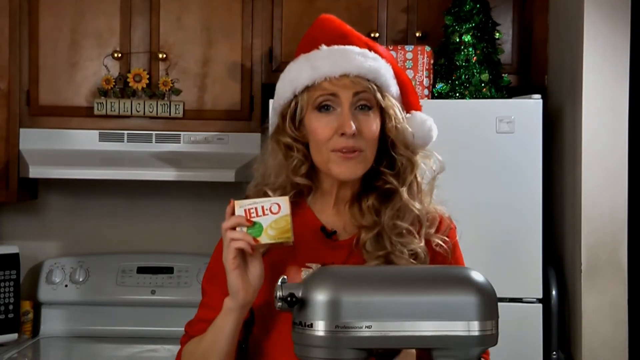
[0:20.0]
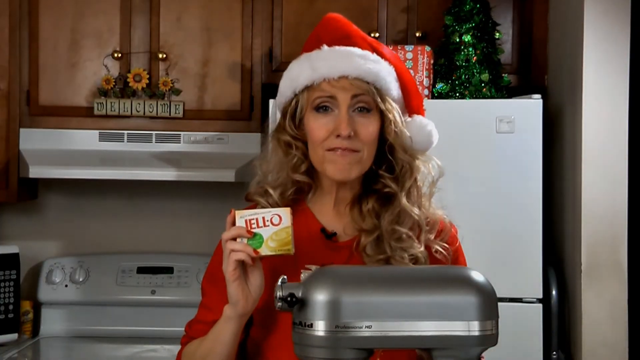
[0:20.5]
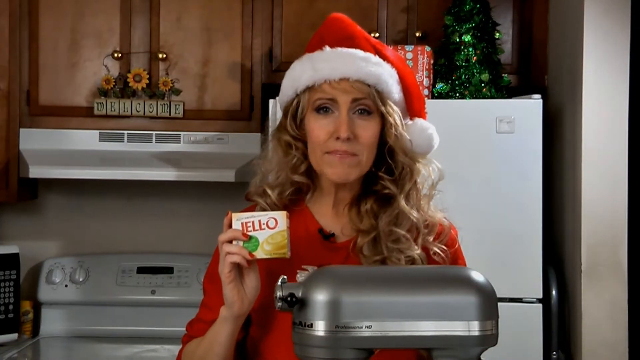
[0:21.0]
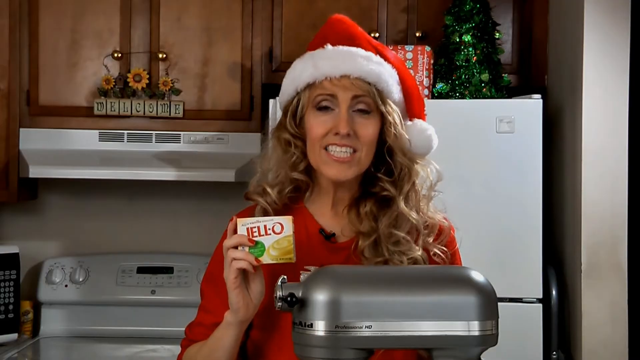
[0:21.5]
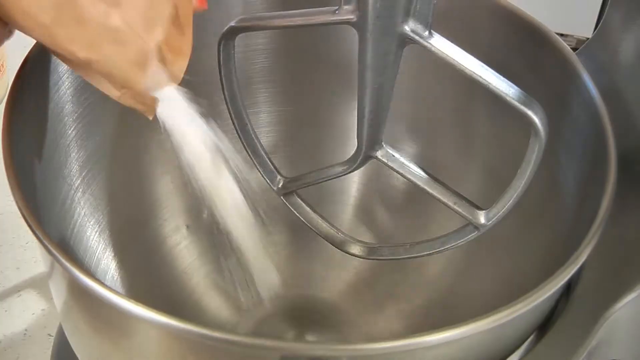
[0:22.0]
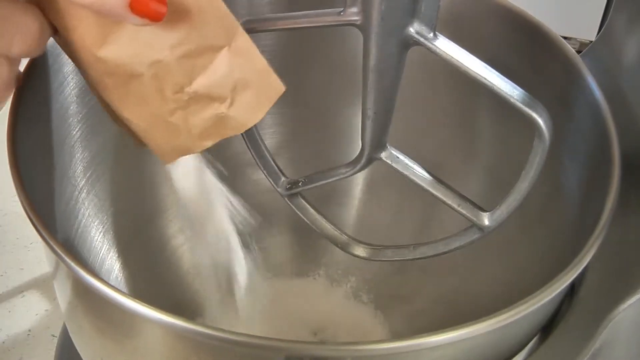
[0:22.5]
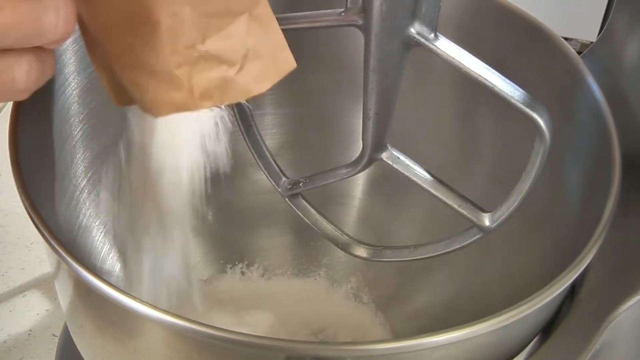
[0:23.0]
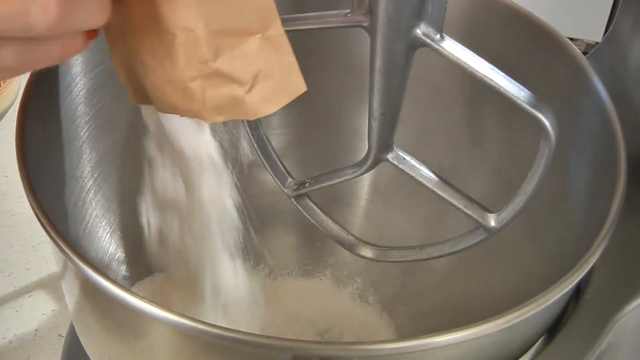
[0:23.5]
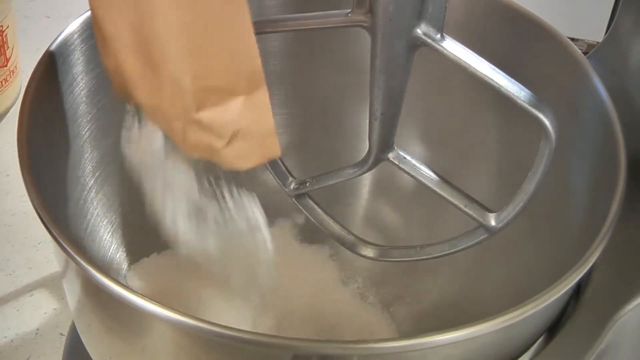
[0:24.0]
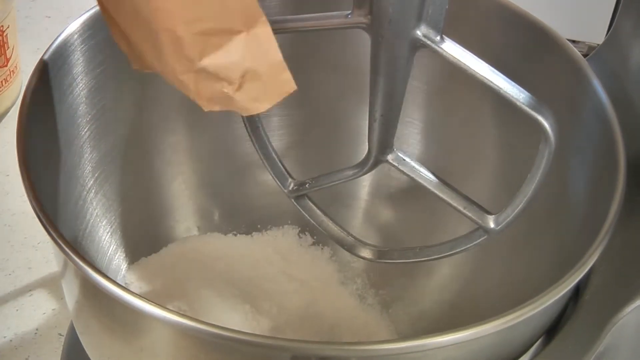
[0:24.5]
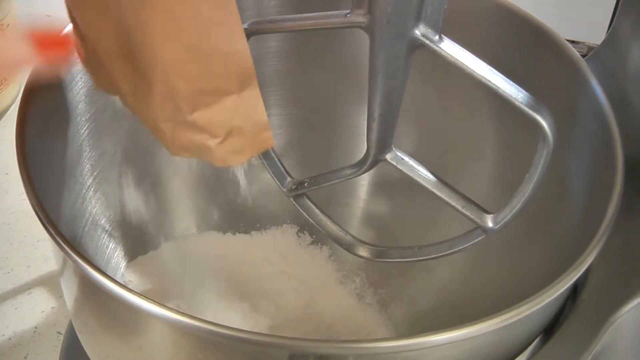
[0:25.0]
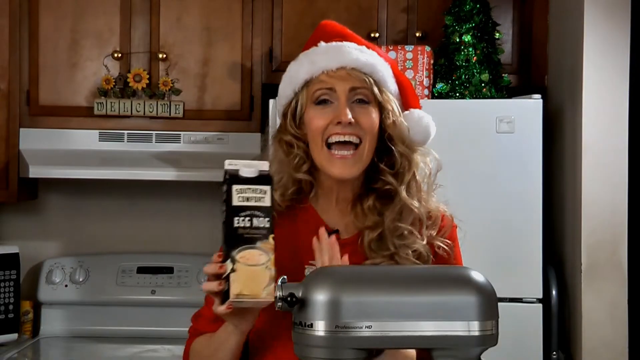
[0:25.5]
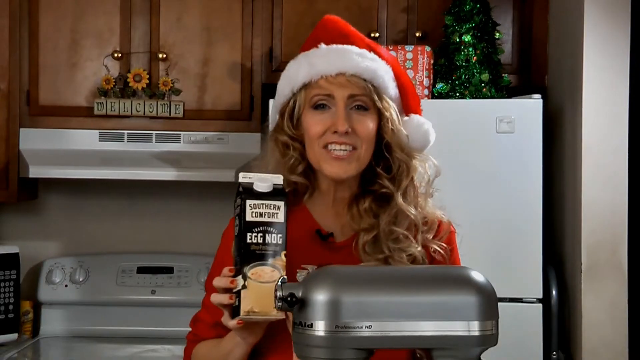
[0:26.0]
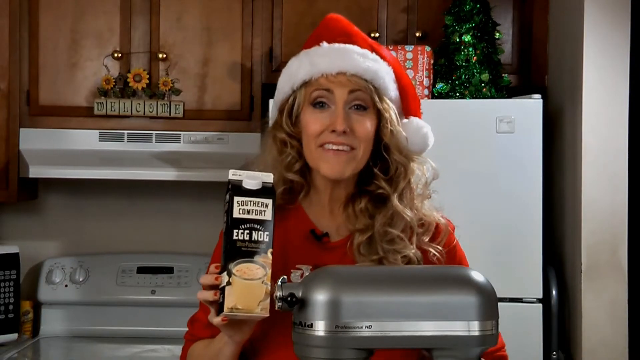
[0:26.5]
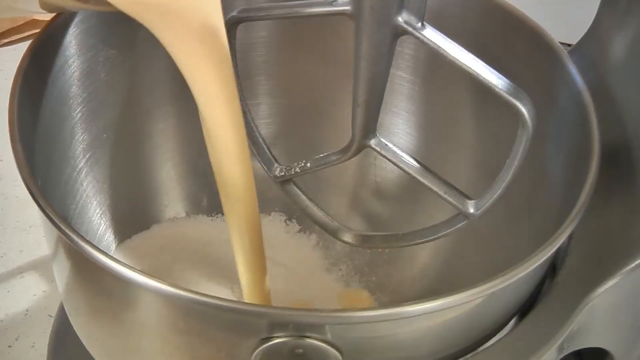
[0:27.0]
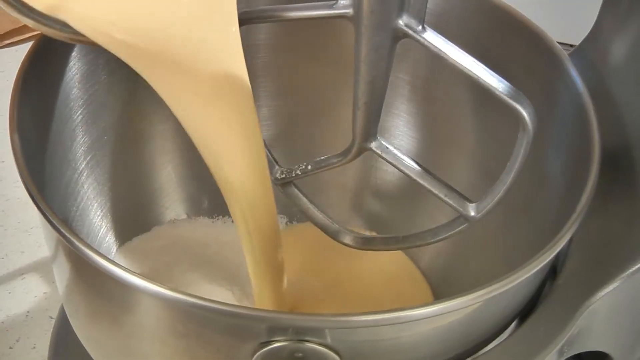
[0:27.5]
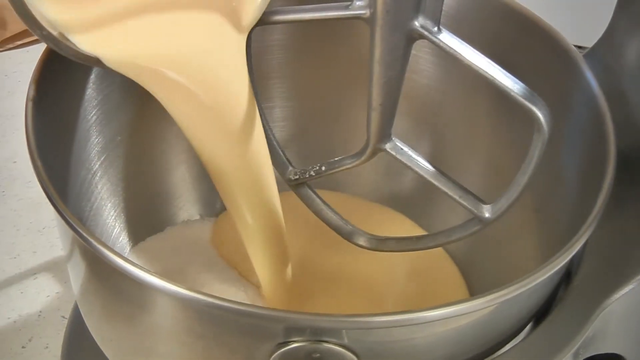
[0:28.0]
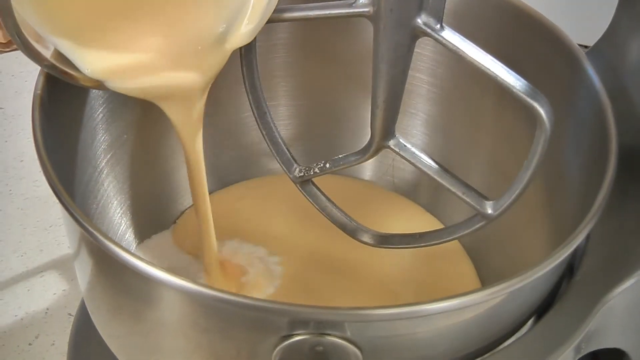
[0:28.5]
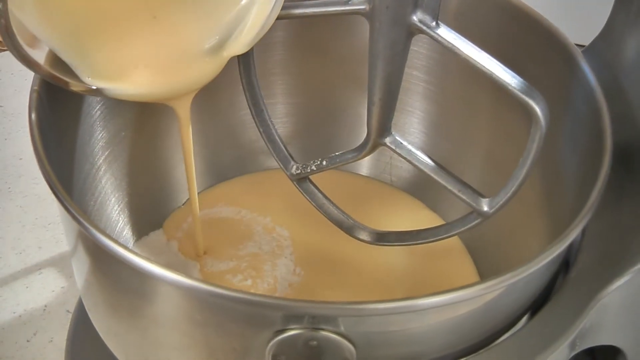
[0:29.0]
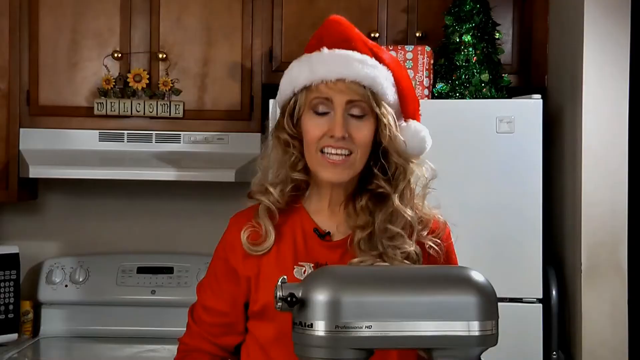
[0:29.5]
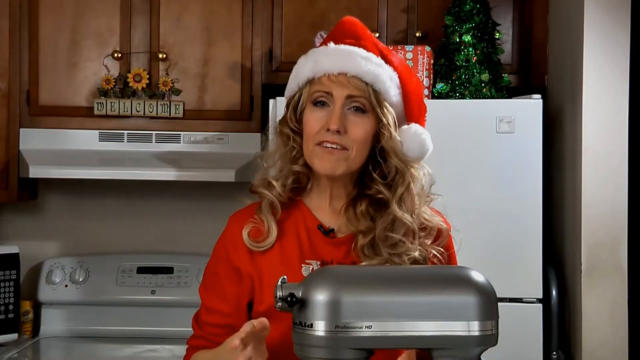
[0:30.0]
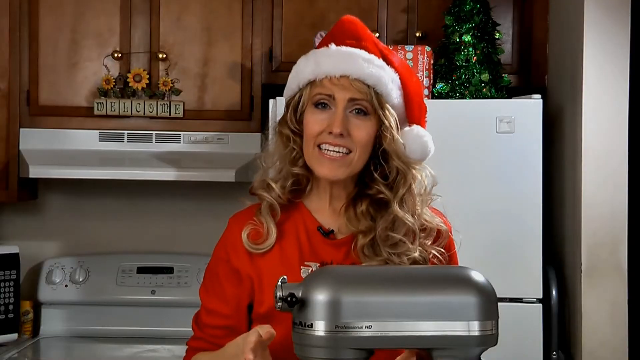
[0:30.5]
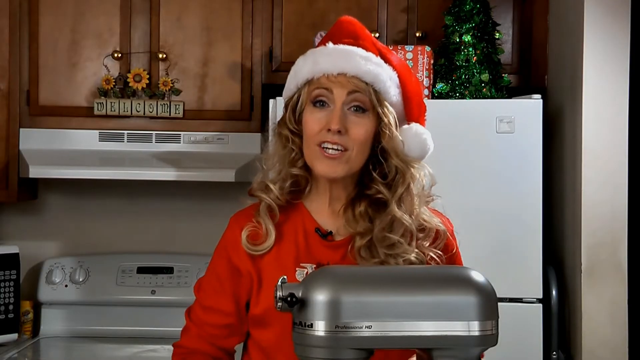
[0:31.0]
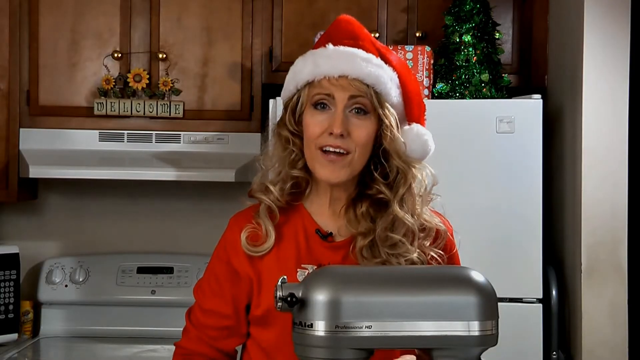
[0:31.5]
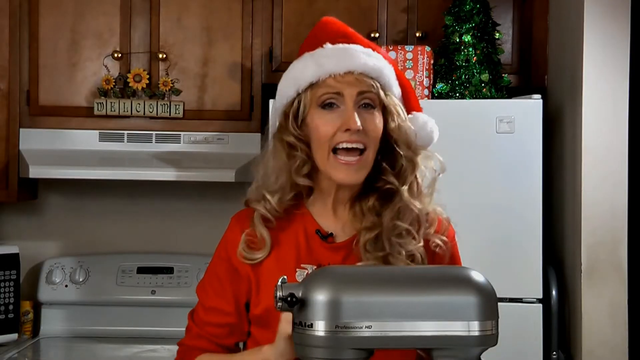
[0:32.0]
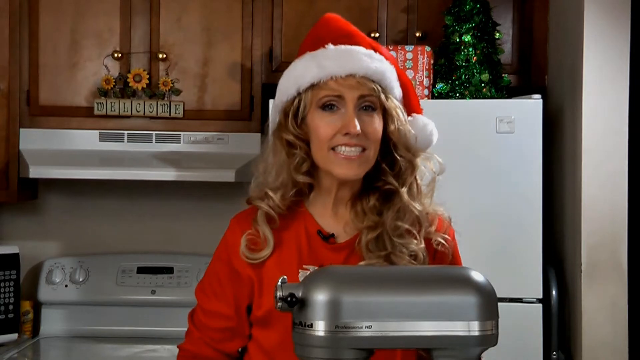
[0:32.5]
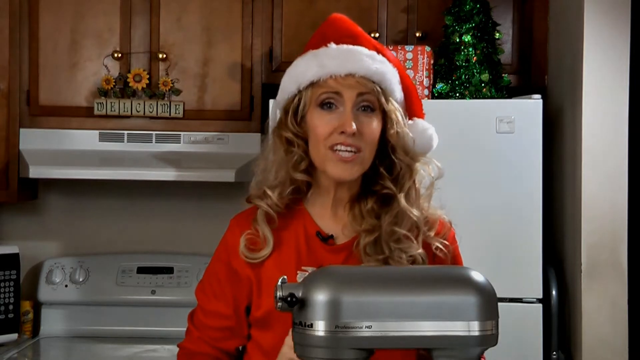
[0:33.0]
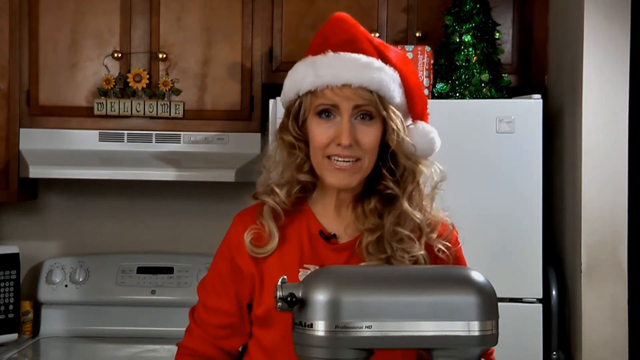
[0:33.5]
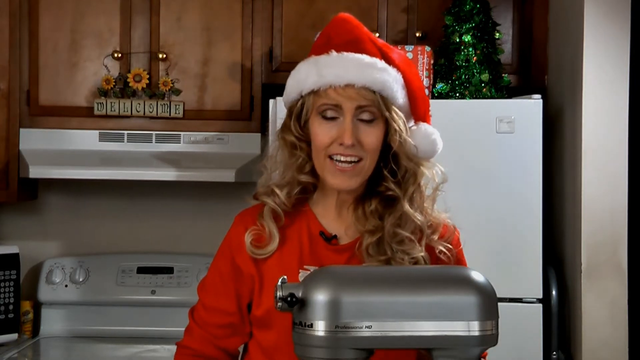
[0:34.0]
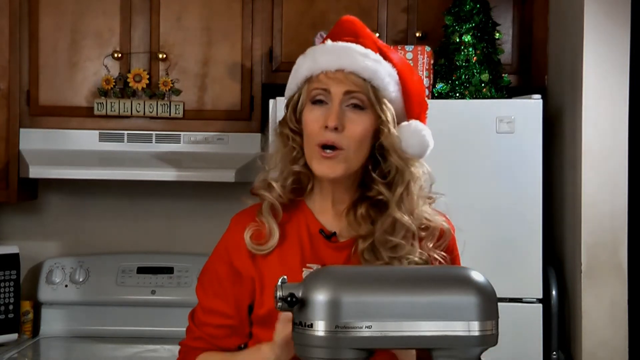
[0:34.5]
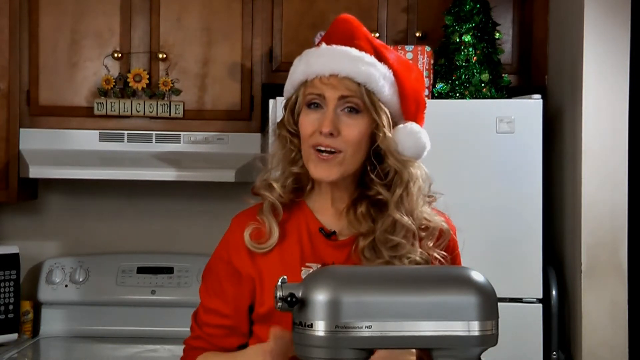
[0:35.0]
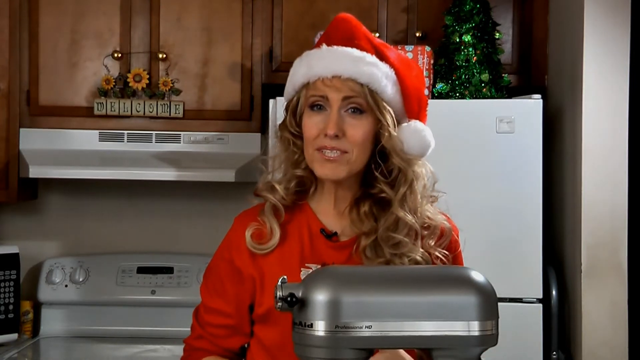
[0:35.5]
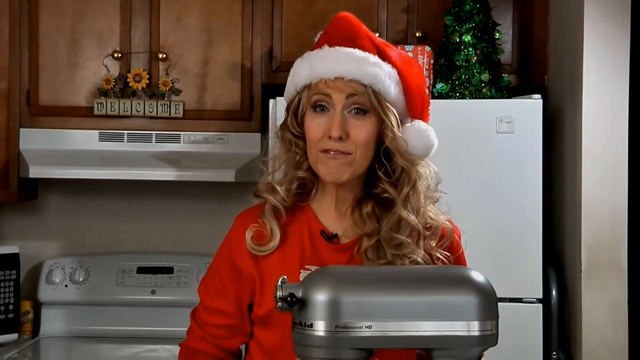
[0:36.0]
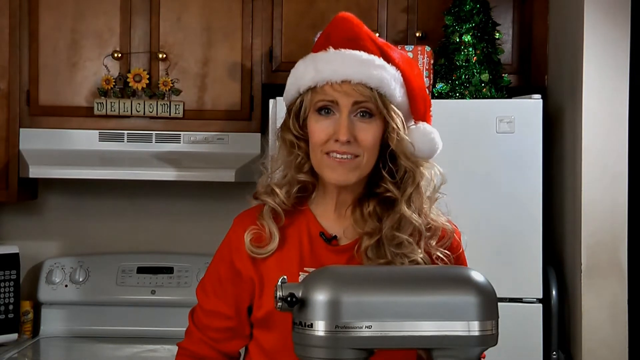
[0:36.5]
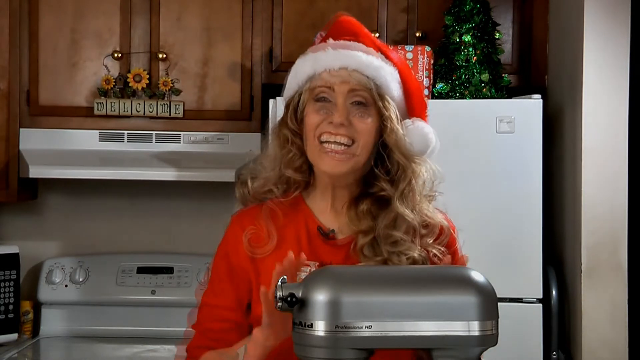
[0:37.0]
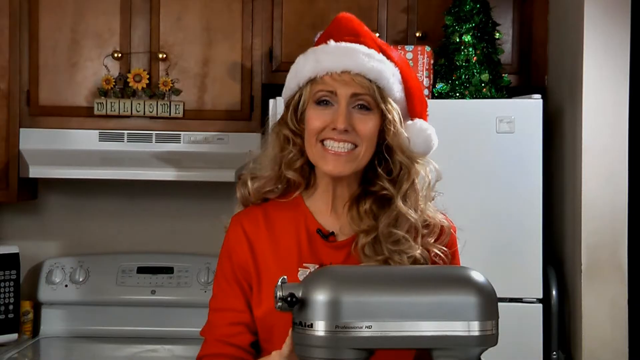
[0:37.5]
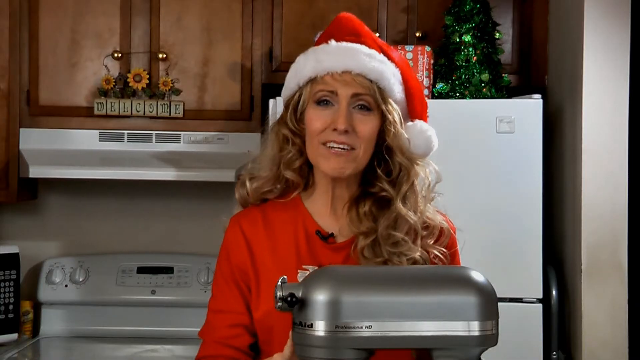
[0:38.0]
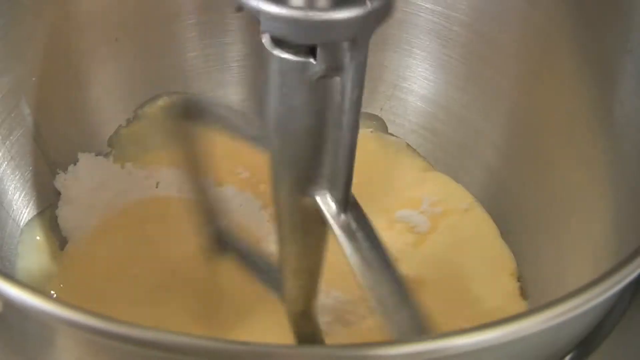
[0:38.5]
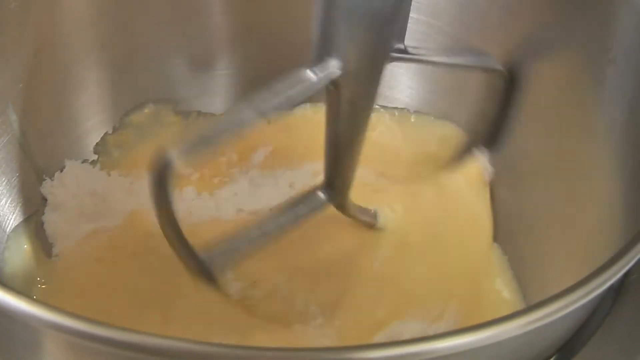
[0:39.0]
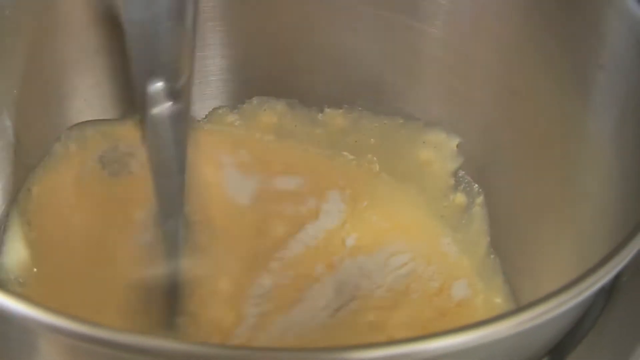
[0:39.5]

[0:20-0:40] The woman holds the Jell-O in her hand, then empties the Jell-O bag into a huge bowl. Next she holds a carton of eggnog in her right hand while speaking. She has a bowl full of eggnog and pours it into the bigger bowl. The video cuts to her talking and gesturing with her hands, then shows a big metal bowl where a big metal automatic mixer mixes the Jell-O and eggnog together while she talks.